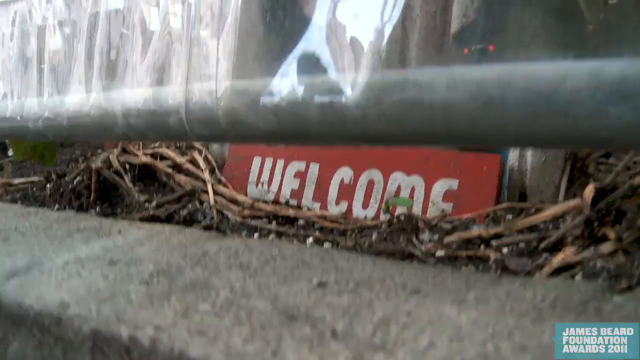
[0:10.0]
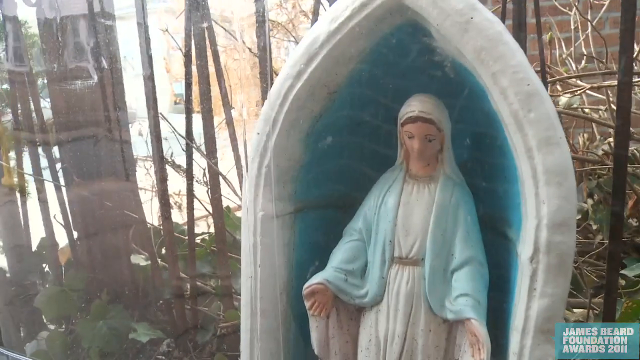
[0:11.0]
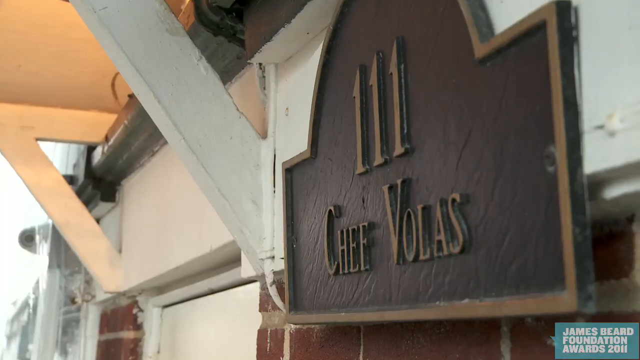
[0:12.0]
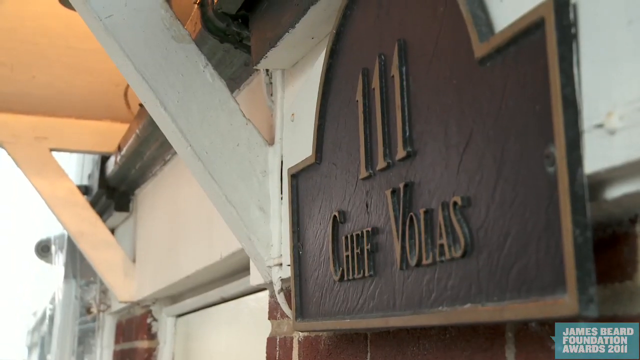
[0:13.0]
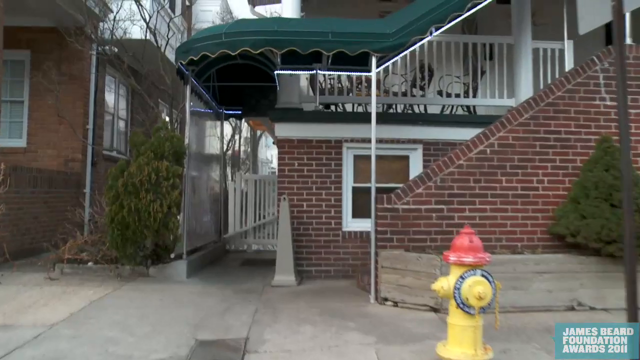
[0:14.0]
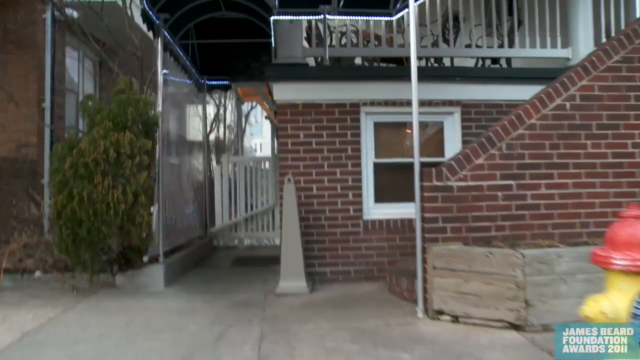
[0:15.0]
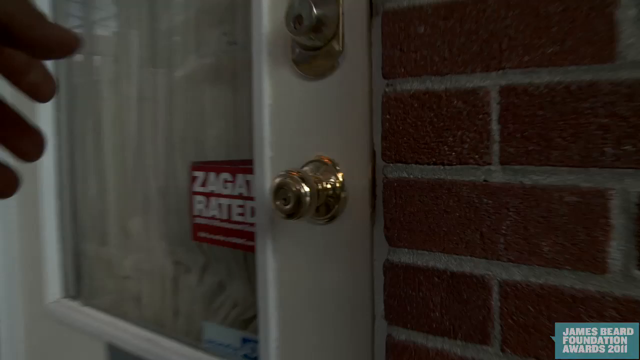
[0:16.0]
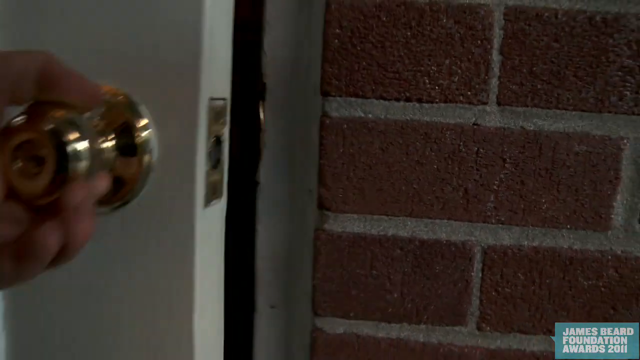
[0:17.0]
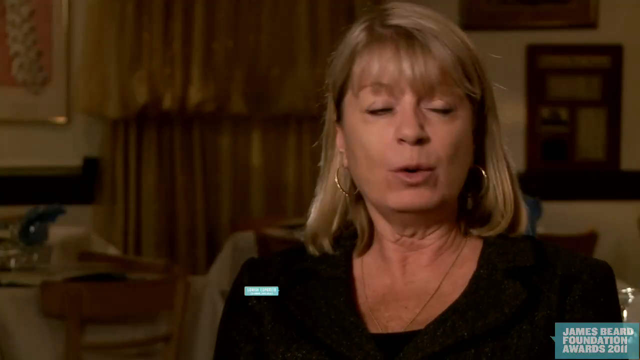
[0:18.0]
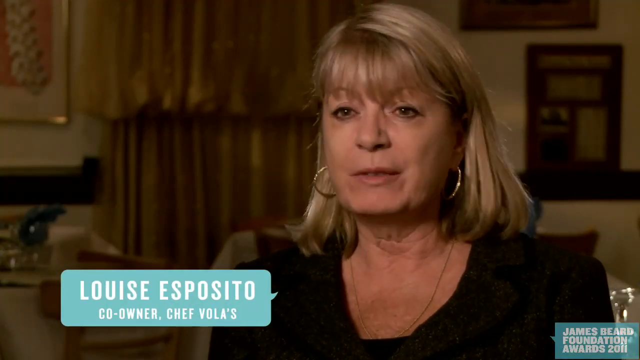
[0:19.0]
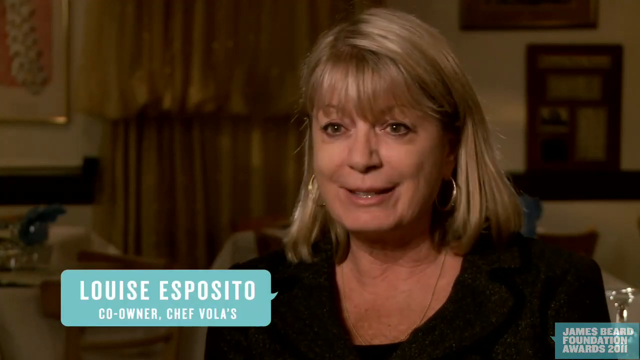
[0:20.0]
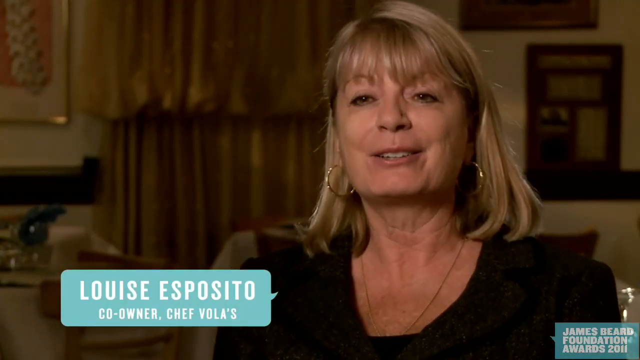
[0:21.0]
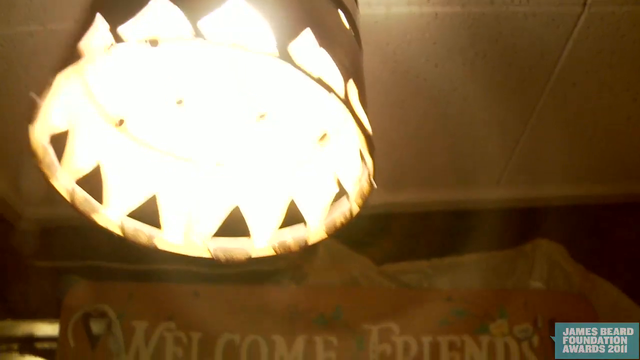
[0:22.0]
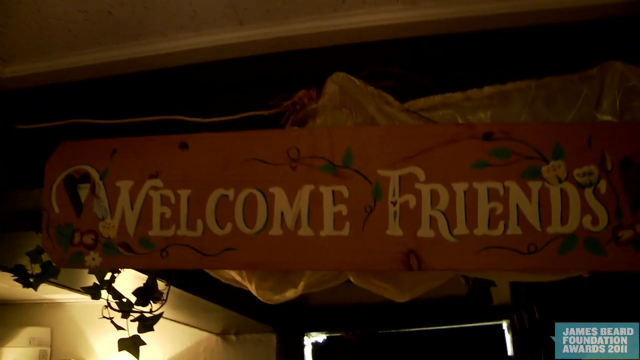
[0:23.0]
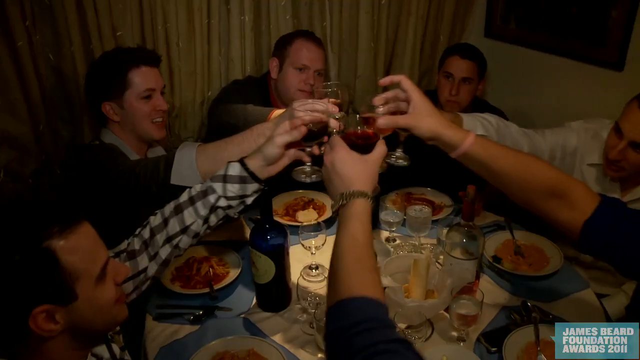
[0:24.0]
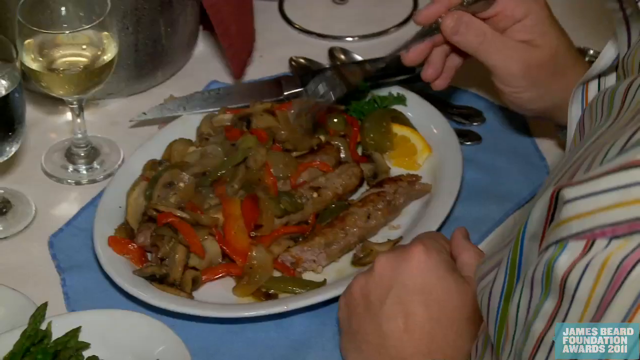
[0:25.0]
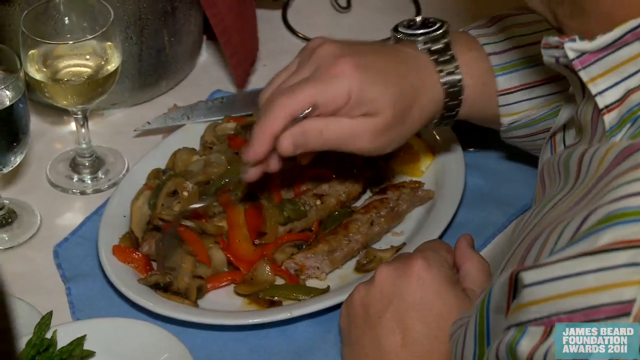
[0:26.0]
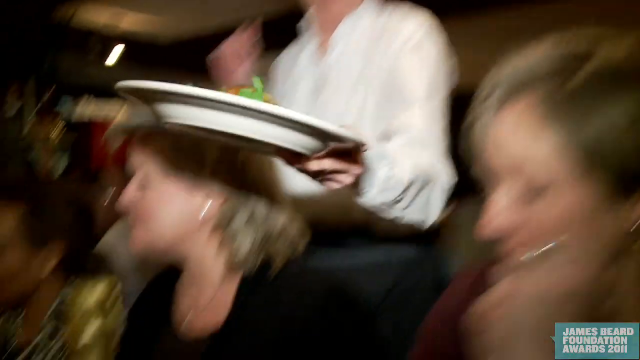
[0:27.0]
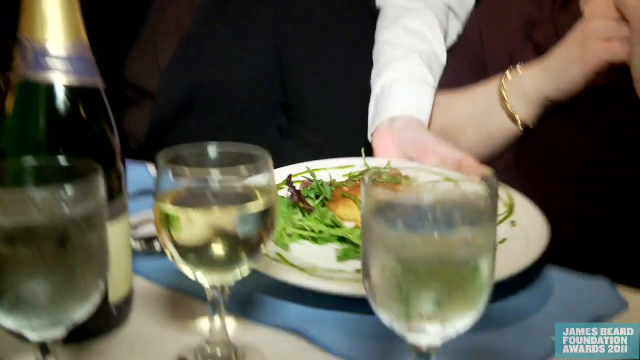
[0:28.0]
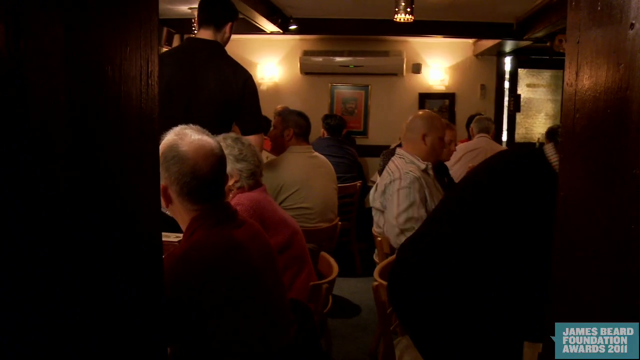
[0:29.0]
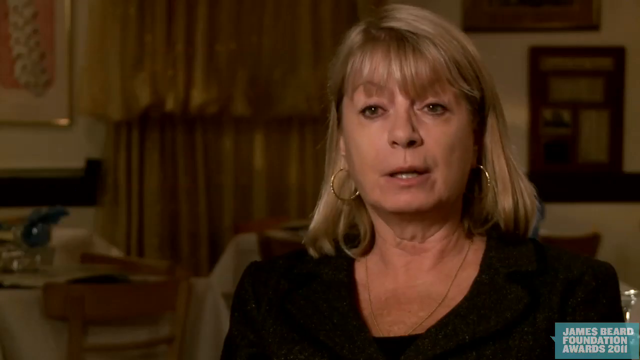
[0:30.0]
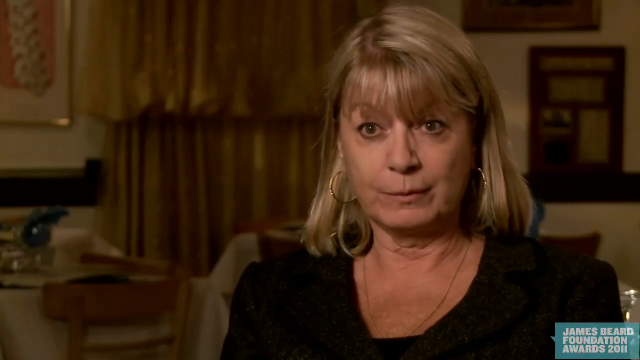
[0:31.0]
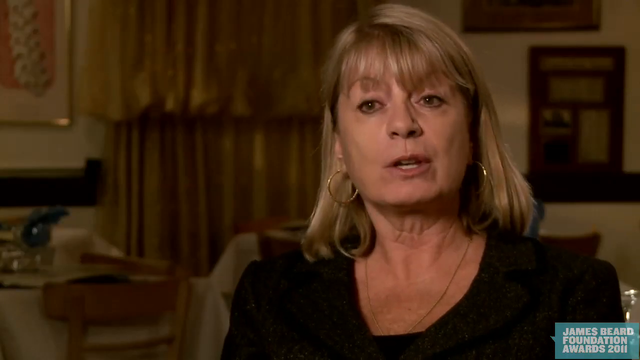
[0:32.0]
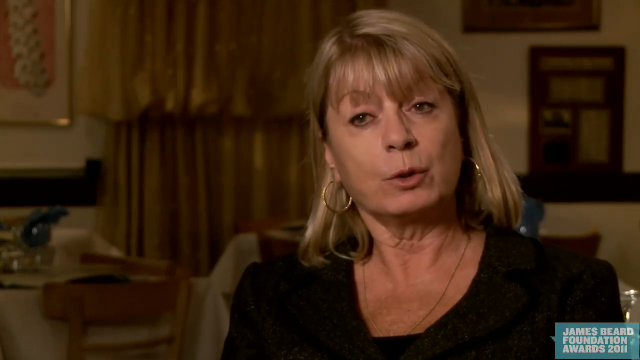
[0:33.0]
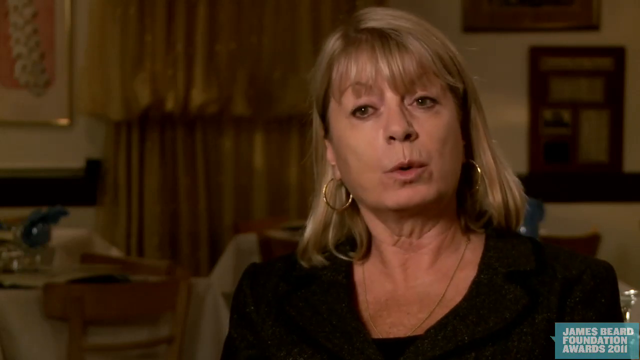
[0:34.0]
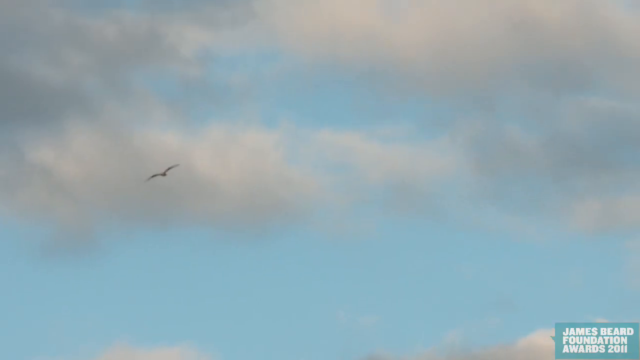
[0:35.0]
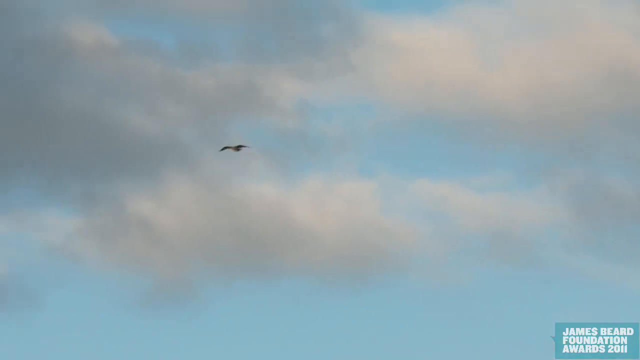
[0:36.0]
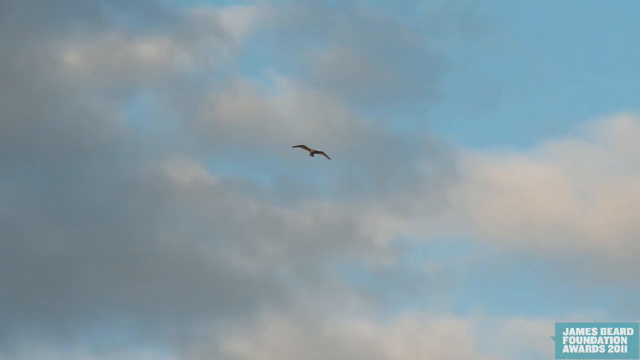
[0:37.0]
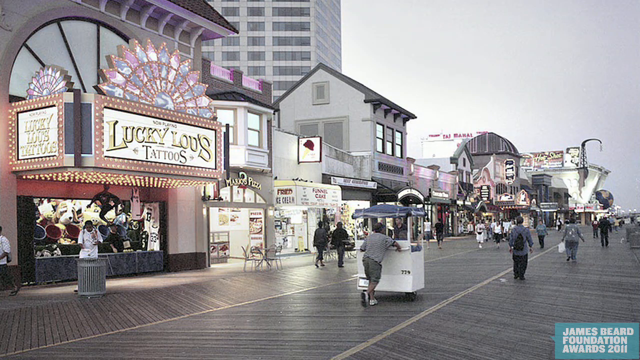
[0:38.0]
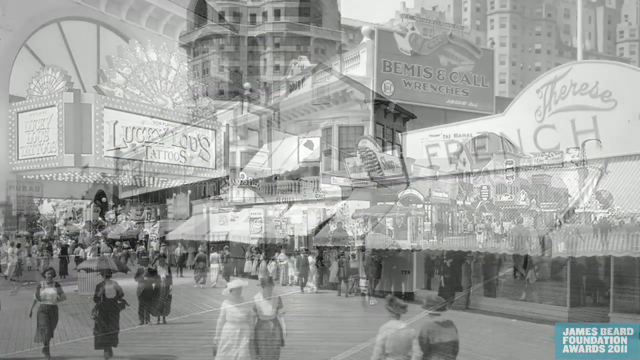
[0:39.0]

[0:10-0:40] The camera focuses on a drawing of Hail Mary, then moves to a logo with "111" written on it, followed by Jeff Wallace. The camera then moves toward the ground floor of a brick building. Inside, a hand opens the door, and Louis Esposito, the owner of Jeff Wallace, is there: a woman who appears to be above middle age, with brown hair, wearing a black dress, a necklace and earrings, talking to the camera as the camera zooms in on her. The video shifts to a light shining over the place. The setting changes to a banner reading "welcome friends", and many people are gathered, several of them cheering with the drinks they hold in their glasses, with food on plates. The camera focuses on a waiter bringing more food while many people eat the dishes, and the video then returns to Louis, who is giving a report.